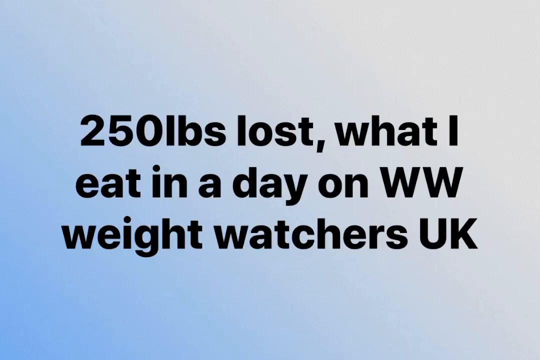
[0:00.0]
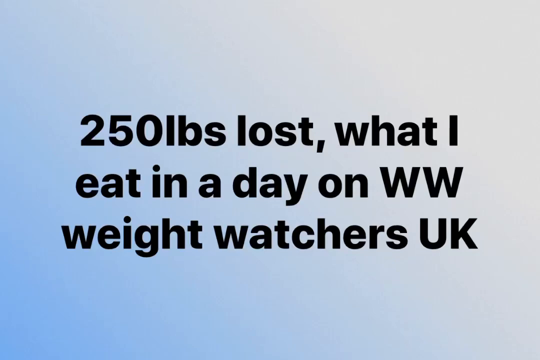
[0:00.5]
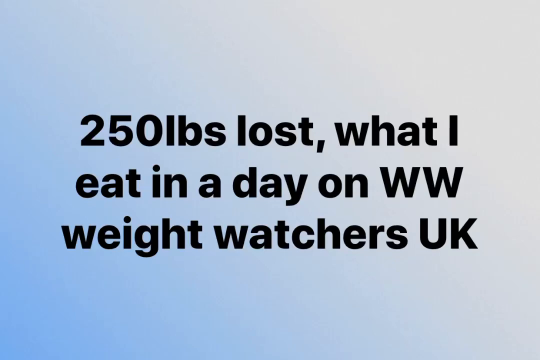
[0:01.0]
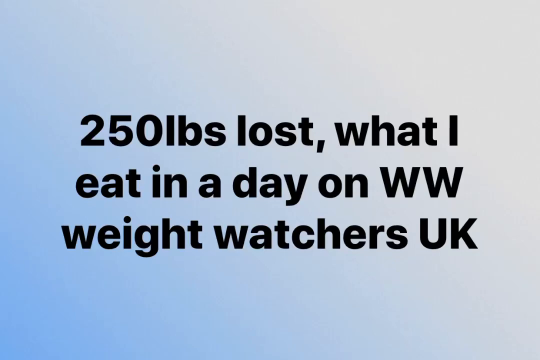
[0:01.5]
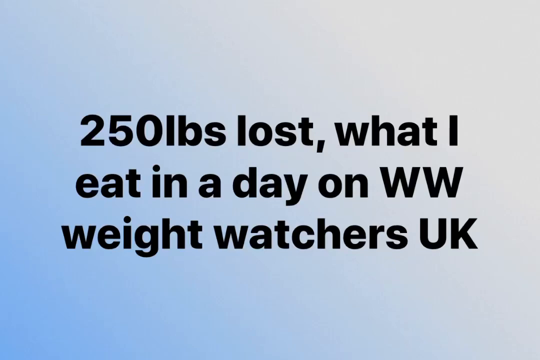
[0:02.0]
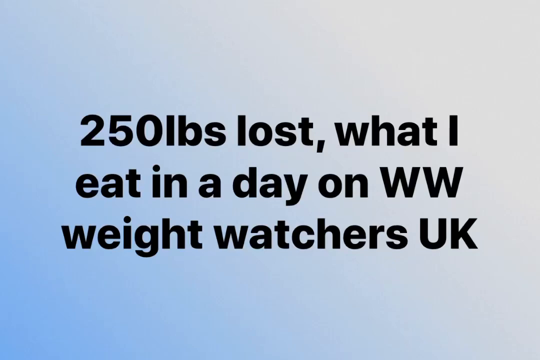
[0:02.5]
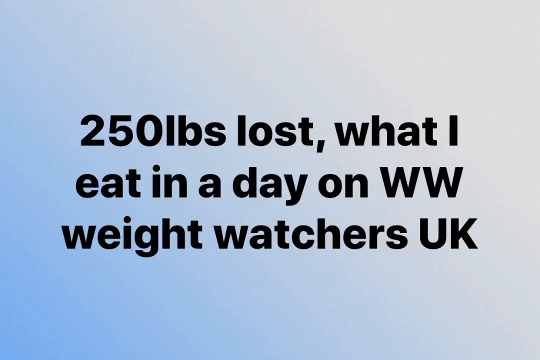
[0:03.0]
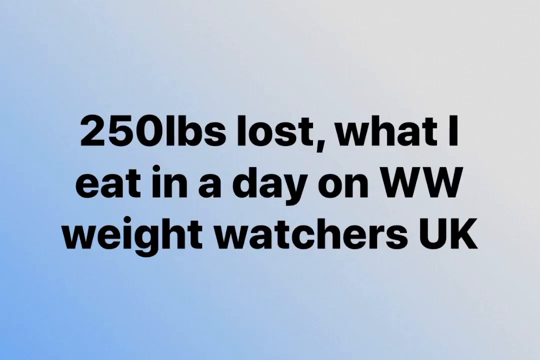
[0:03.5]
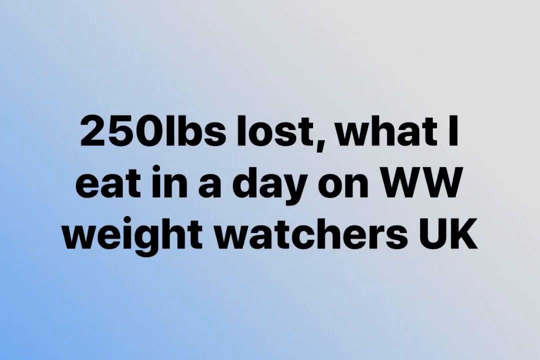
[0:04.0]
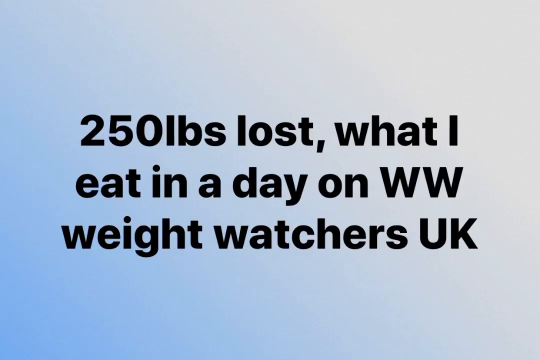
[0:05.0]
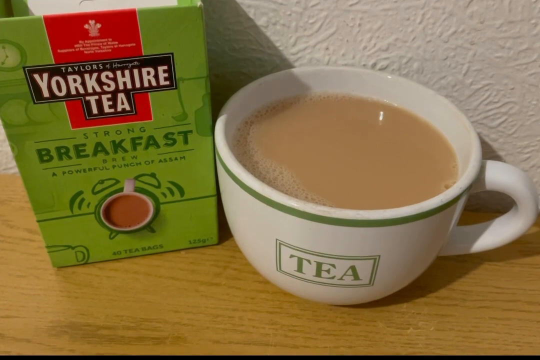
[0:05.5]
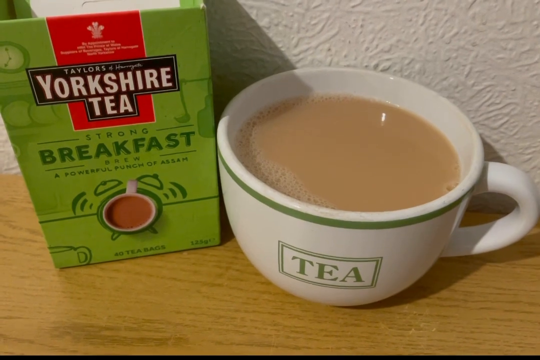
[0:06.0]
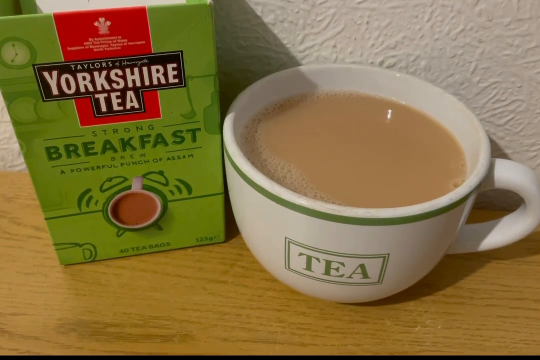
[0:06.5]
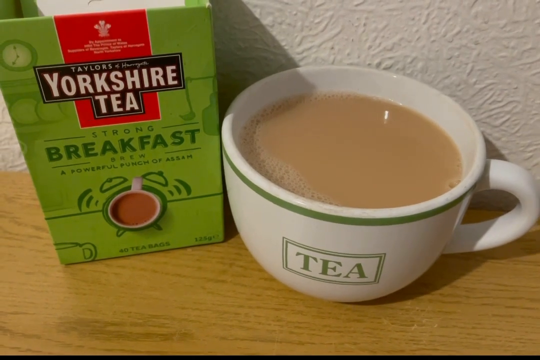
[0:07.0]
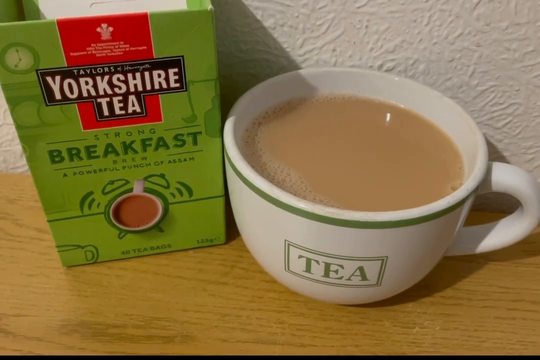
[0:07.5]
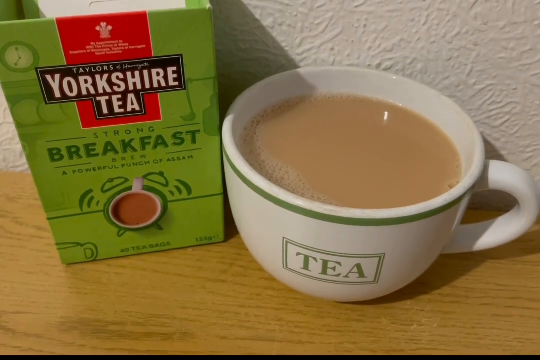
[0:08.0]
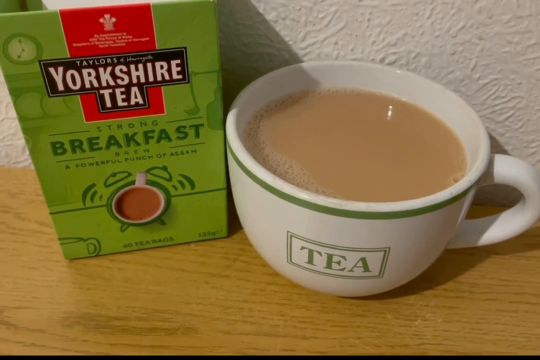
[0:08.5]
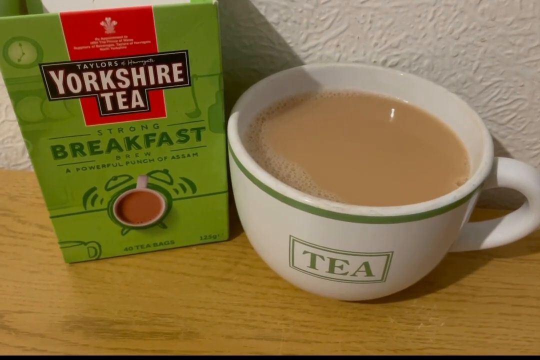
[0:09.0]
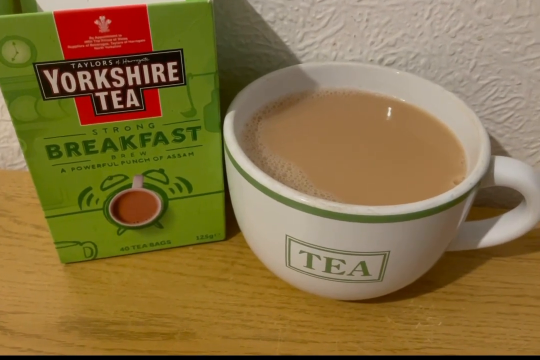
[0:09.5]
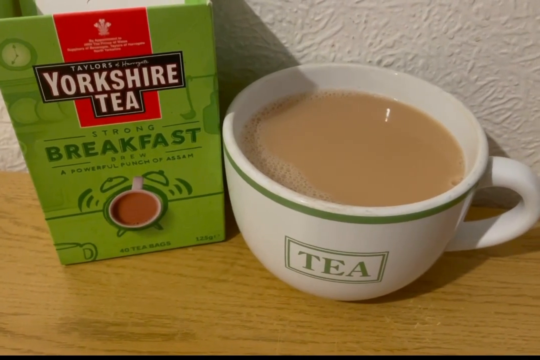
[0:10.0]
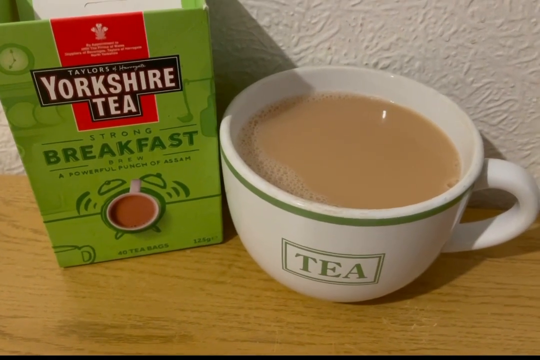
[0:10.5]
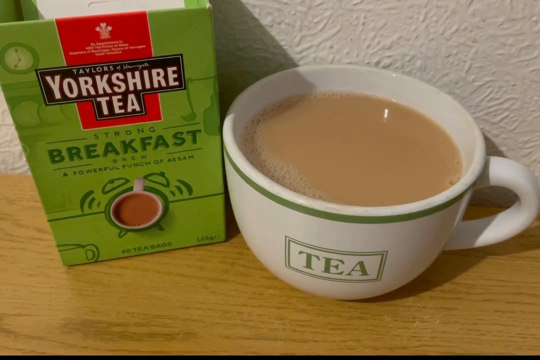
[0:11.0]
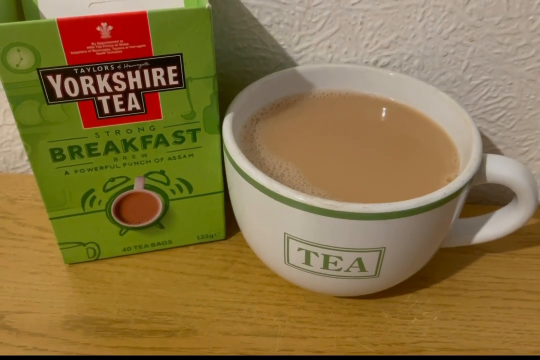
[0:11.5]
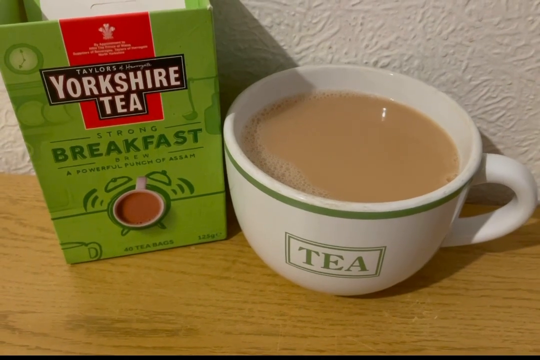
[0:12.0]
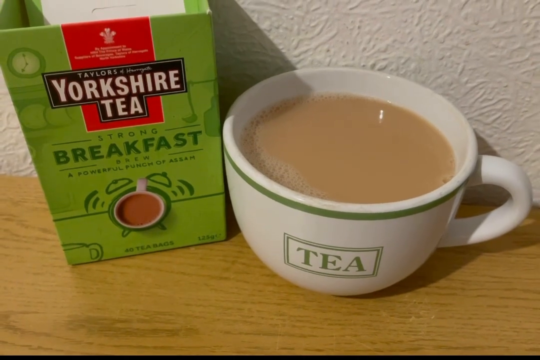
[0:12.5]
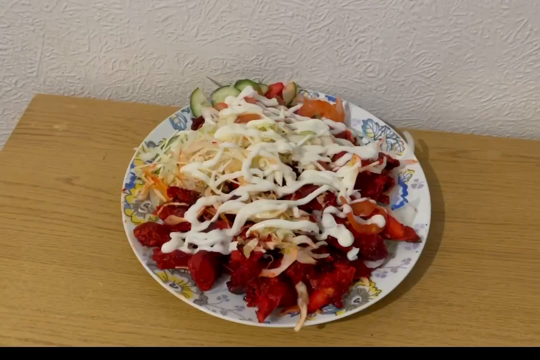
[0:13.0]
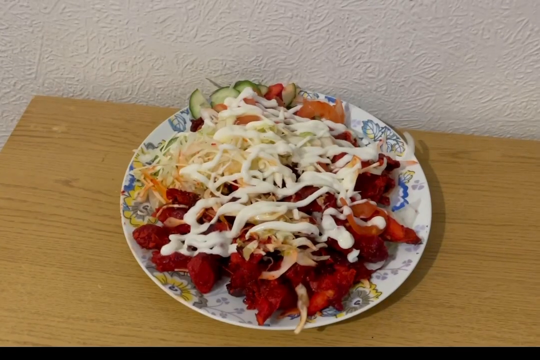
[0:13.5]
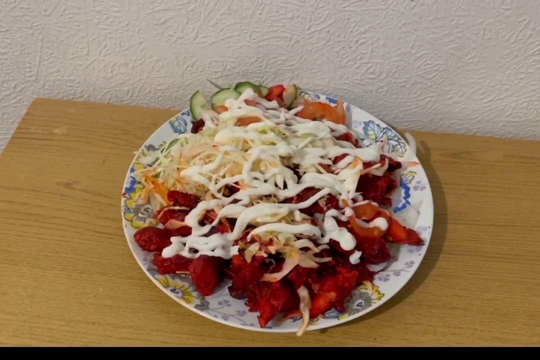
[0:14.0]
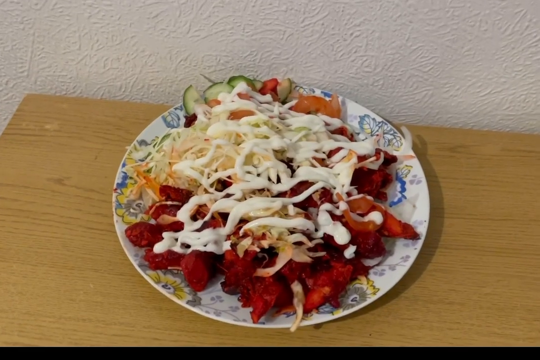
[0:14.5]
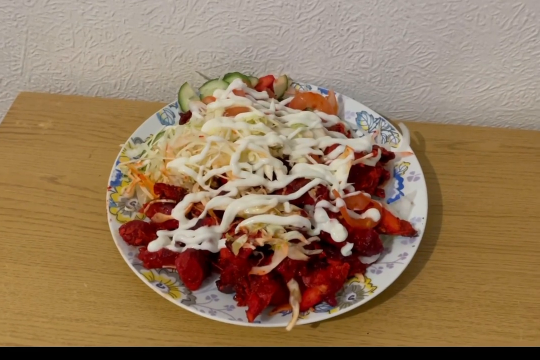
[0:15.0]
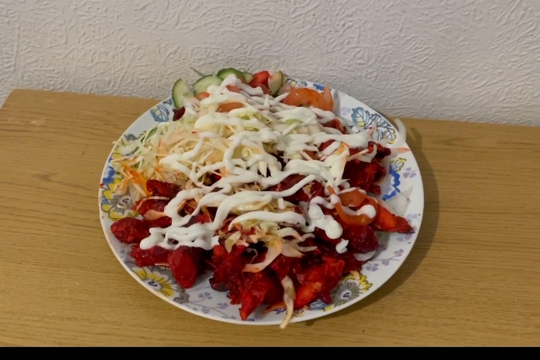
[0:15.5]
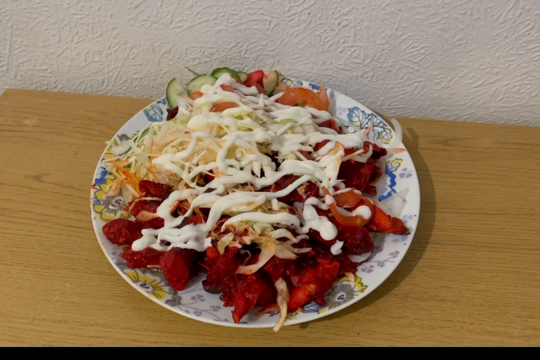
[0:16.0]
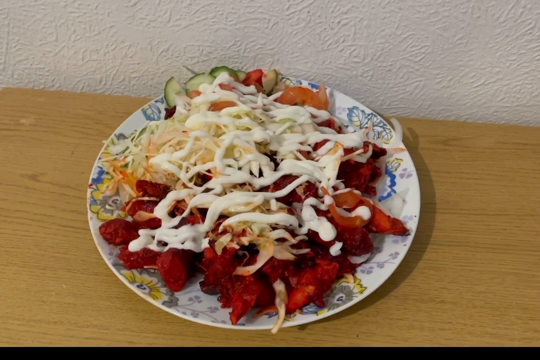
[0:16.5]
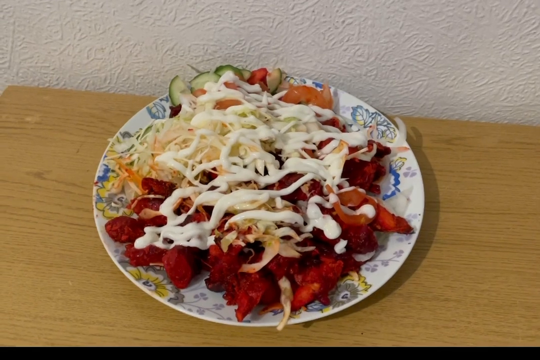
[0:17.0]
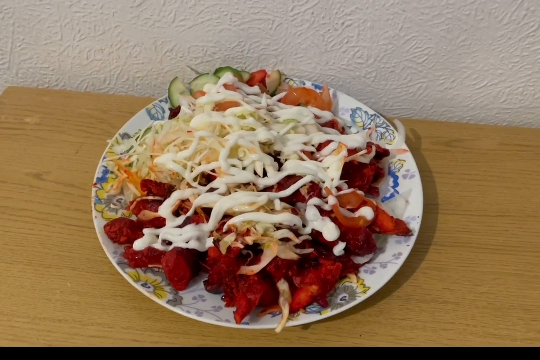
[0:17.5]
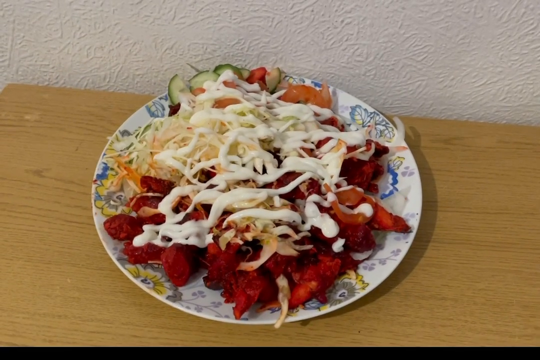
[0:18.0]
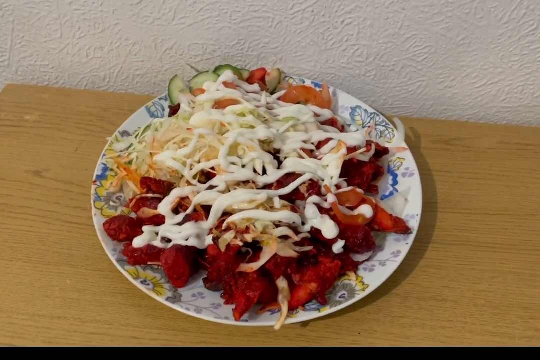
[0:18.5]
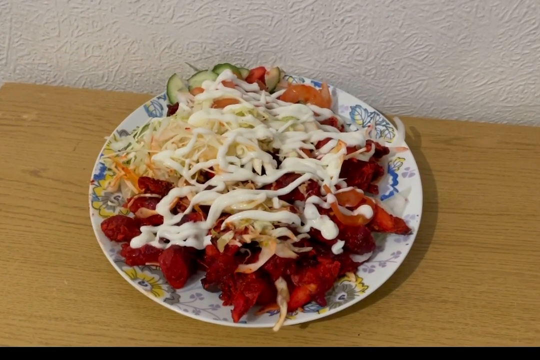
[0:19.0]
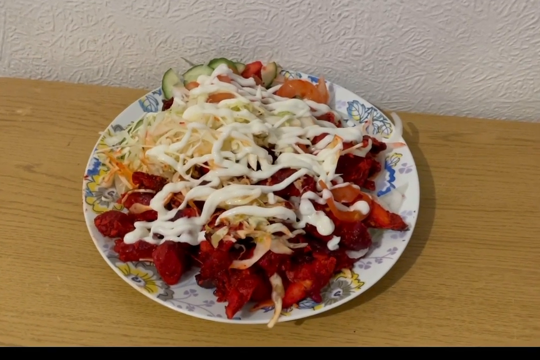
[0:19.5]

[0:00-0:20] The video opens on a largely white screen with a blue tinge that grows toward the bottom, so the bottom corner is a pale blue. Black text across the screen reads "250 pounds lost what I eat in a day on WW" over two lines, with "Weight Watchers UK" on a new line below. The next shot shows a wall behind, painted white, with what is perhaps artex on it. There is a packet of Yorkshire tea, strong breakfast brew, in a green and red box. On the right of the image is a white and green ceramic cup with "tea" on the front in green lettering, with a green border around the word. The rim of the cup is also green, and the cup is on a wood-effect surface. The video then moves to a plate of salad on the same wood-effect worktop or table, with the same textured wall covering behind it. It is some sort of meat with salad: lots of bean sprouts and sliced cucumber. The meat is a deep red colour.